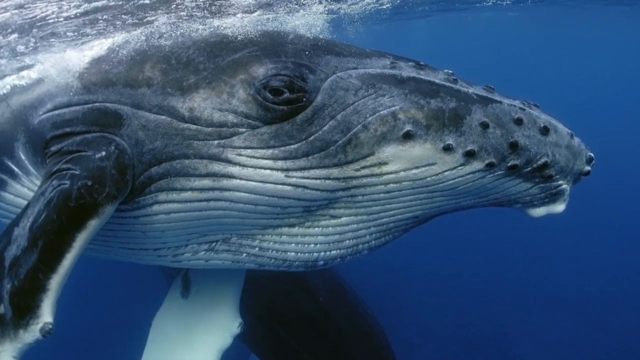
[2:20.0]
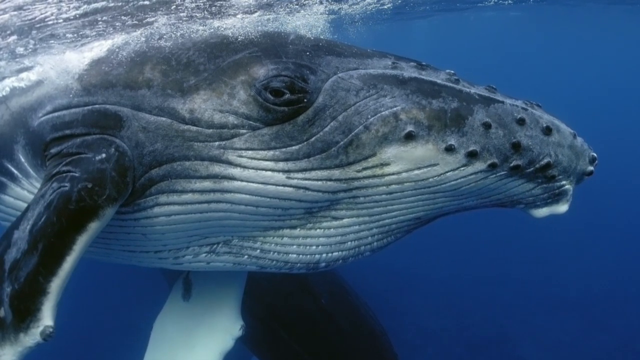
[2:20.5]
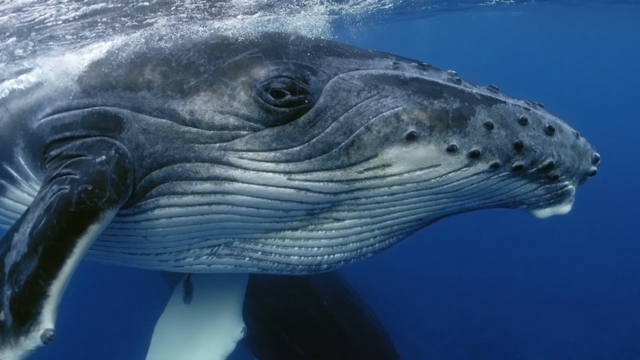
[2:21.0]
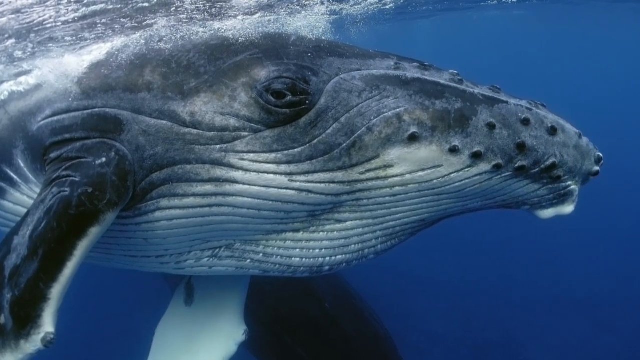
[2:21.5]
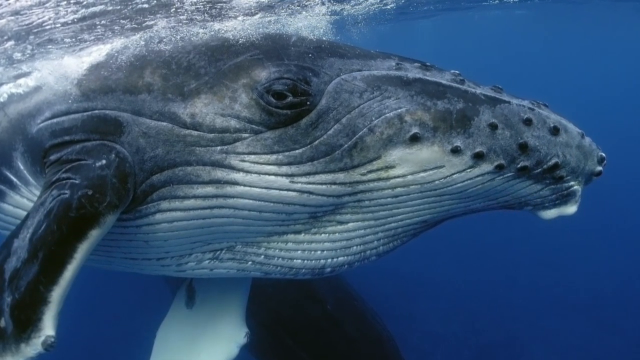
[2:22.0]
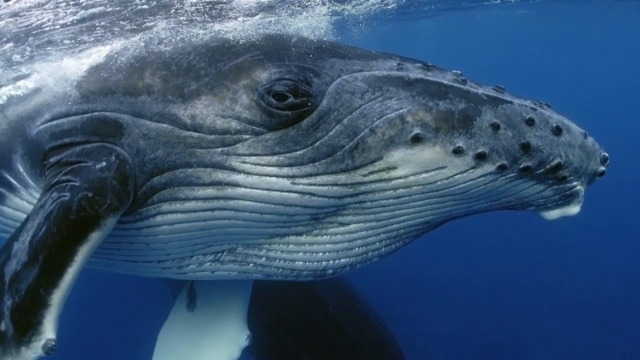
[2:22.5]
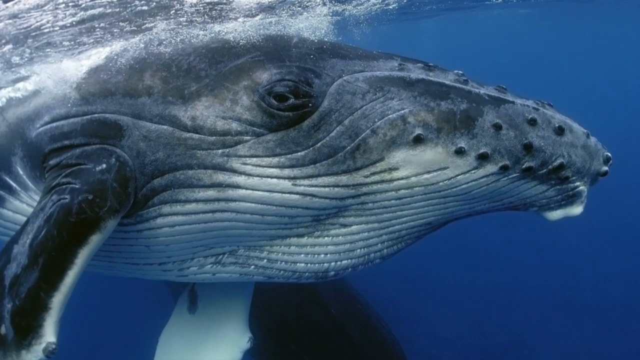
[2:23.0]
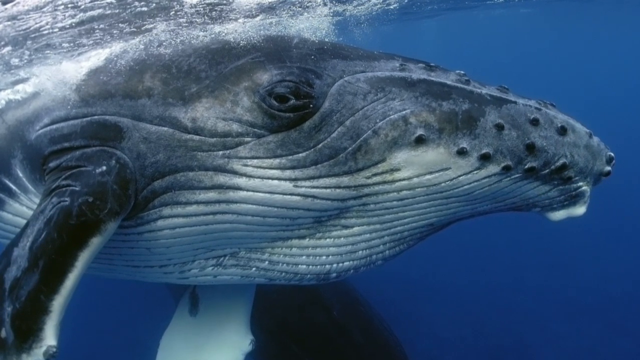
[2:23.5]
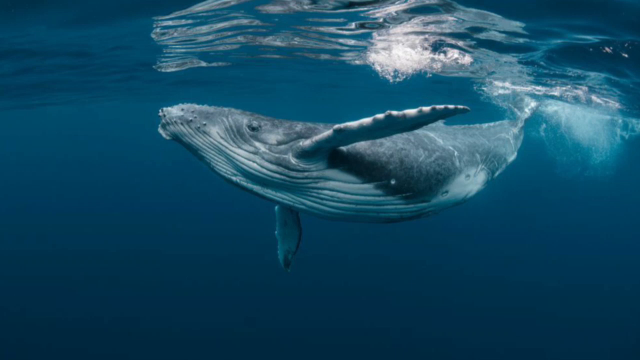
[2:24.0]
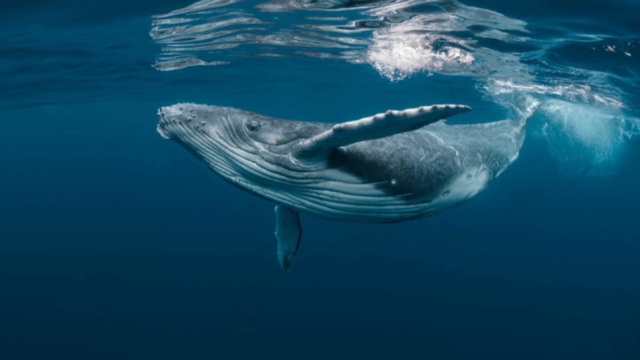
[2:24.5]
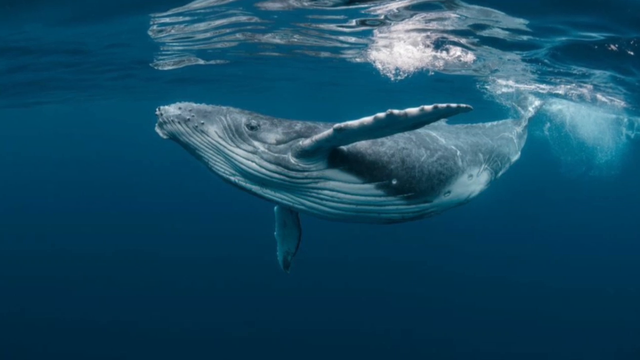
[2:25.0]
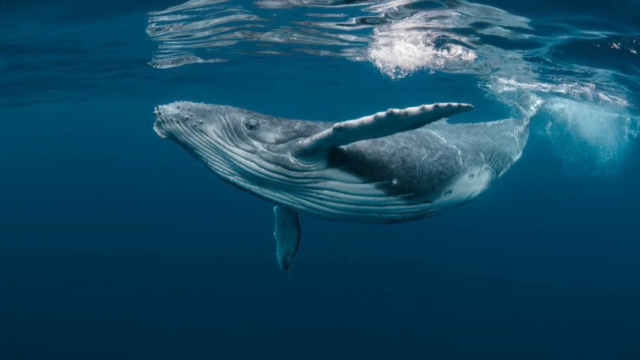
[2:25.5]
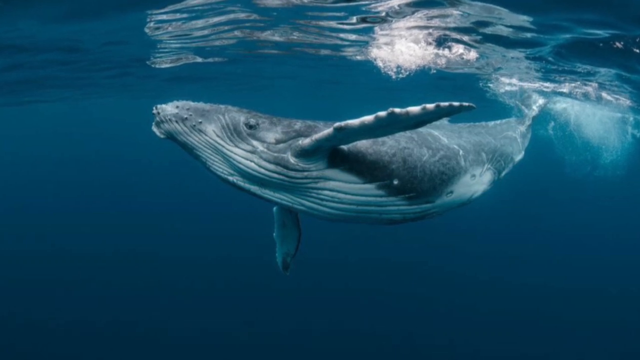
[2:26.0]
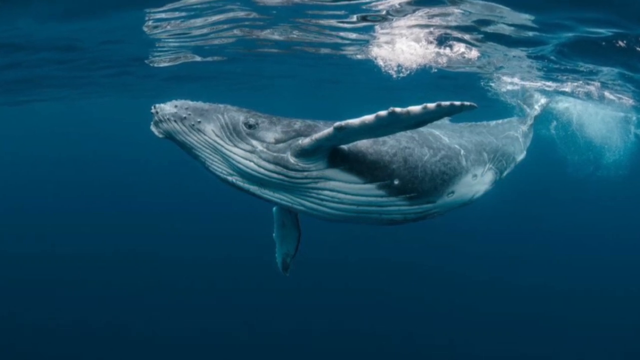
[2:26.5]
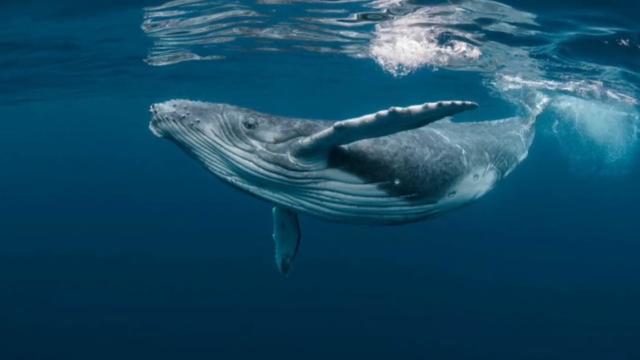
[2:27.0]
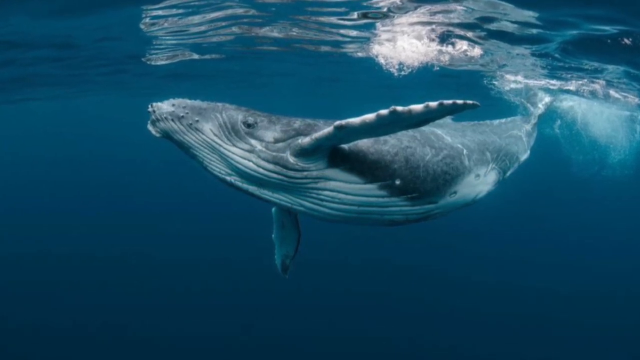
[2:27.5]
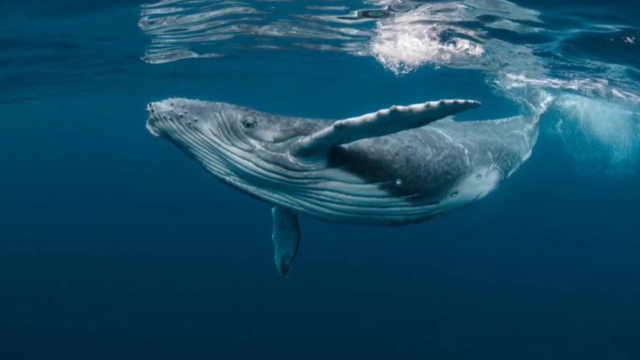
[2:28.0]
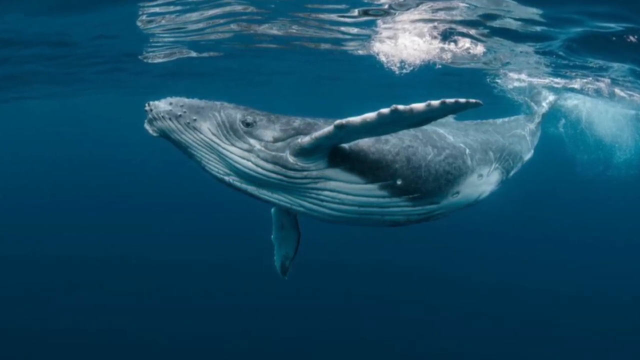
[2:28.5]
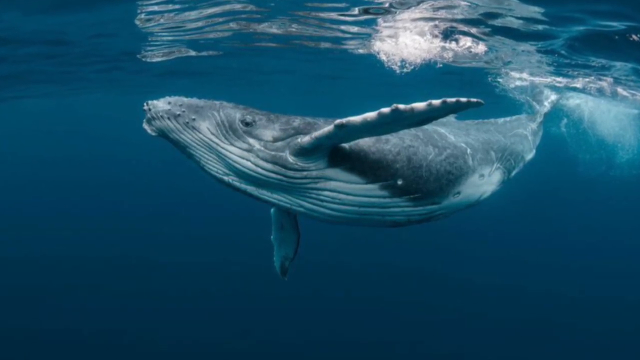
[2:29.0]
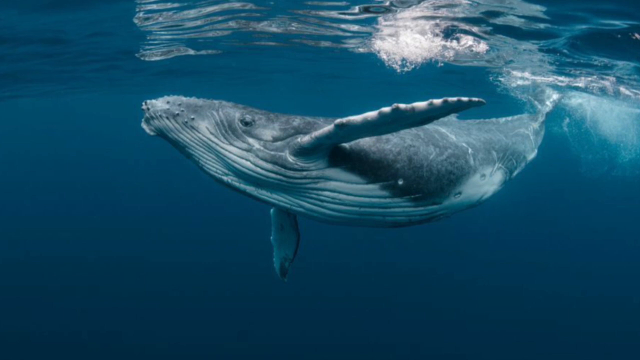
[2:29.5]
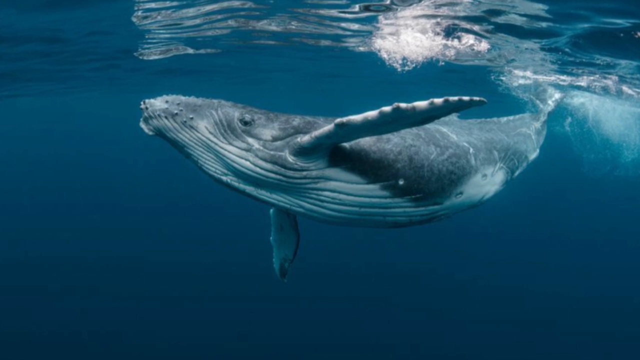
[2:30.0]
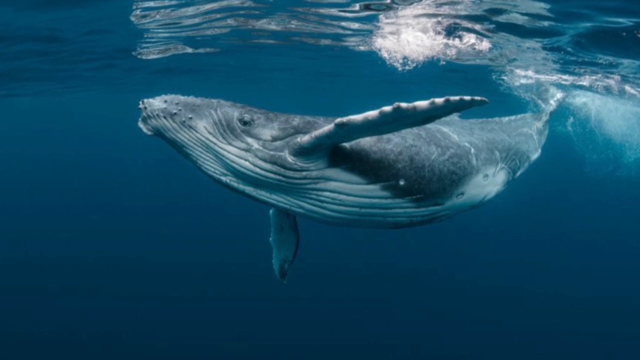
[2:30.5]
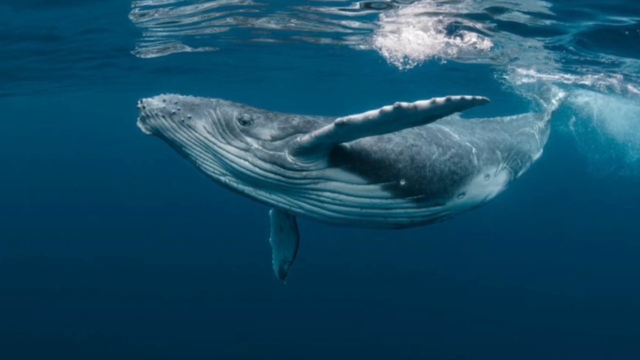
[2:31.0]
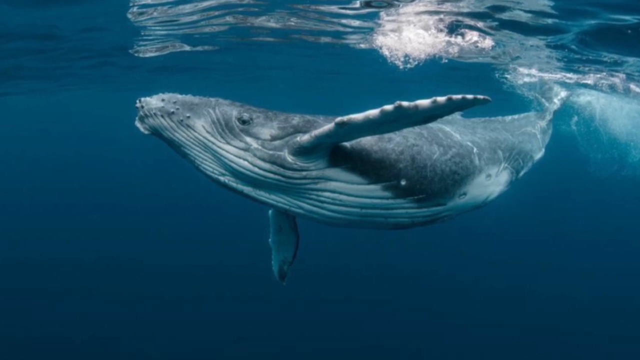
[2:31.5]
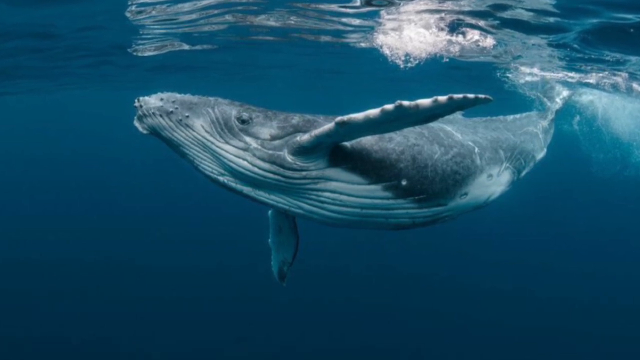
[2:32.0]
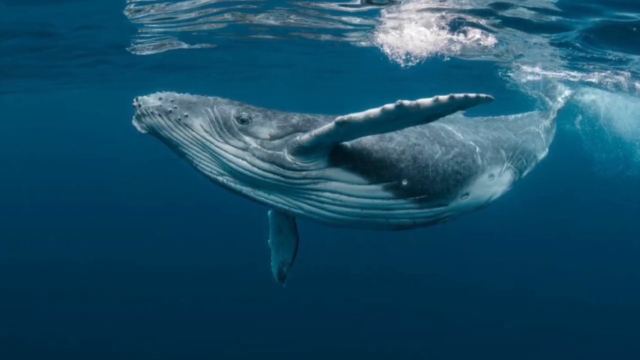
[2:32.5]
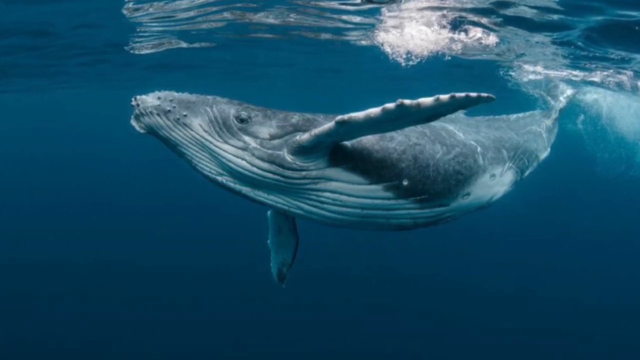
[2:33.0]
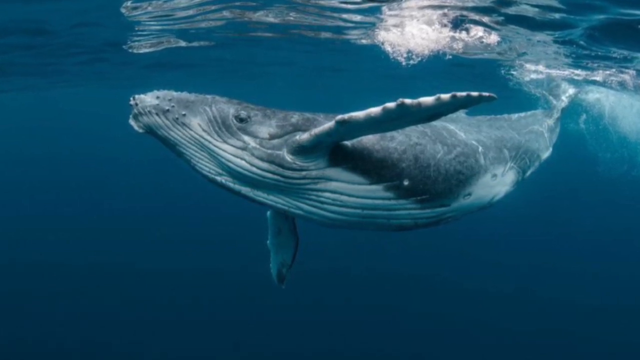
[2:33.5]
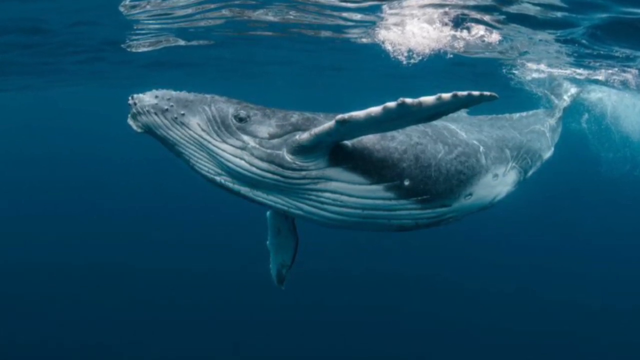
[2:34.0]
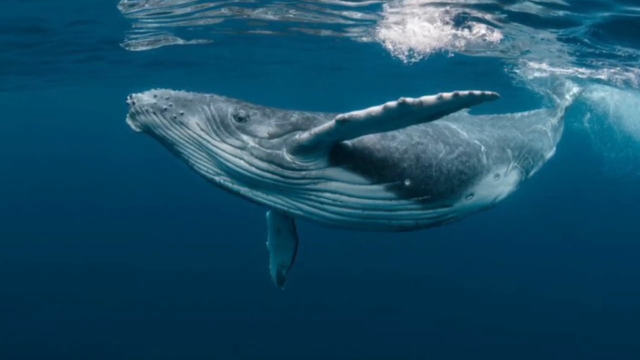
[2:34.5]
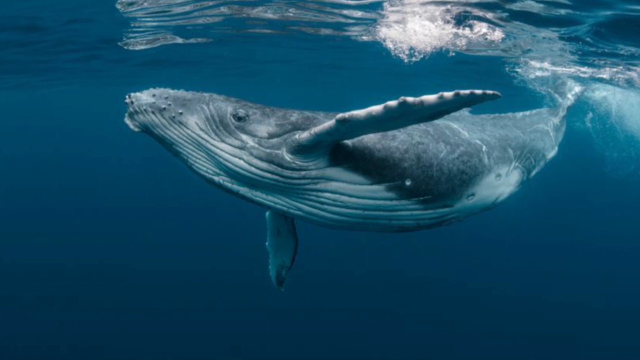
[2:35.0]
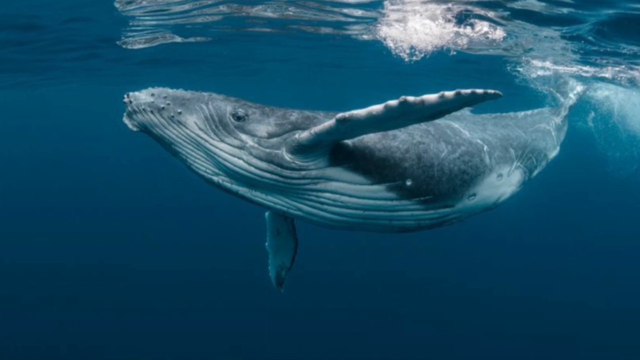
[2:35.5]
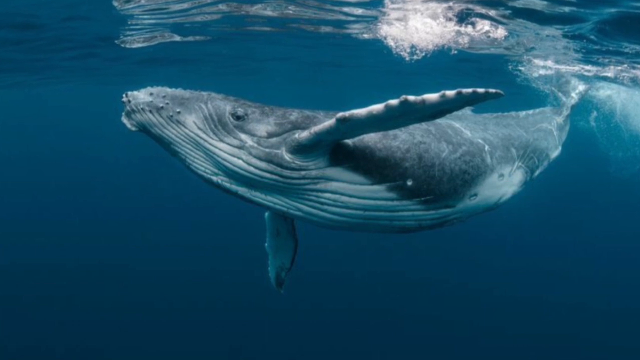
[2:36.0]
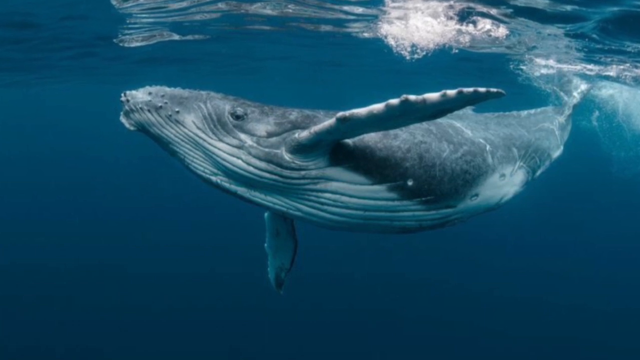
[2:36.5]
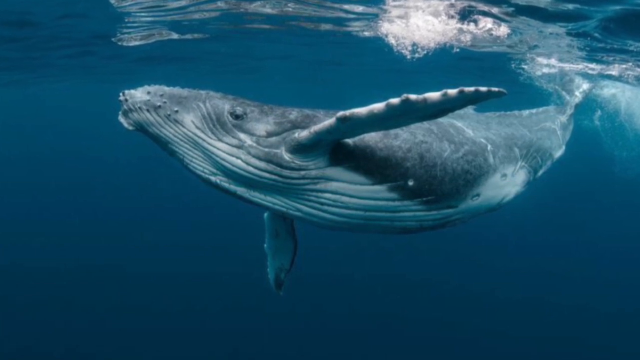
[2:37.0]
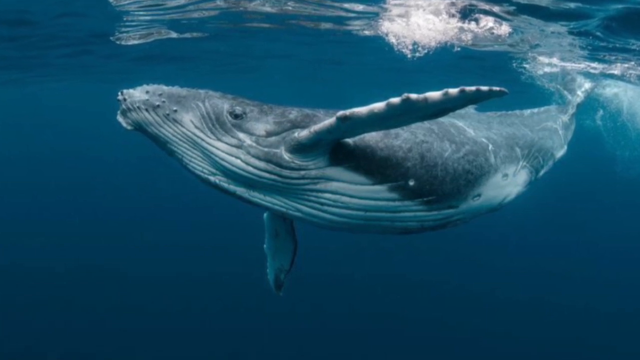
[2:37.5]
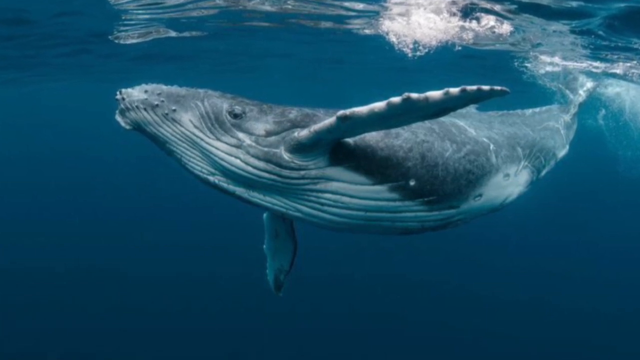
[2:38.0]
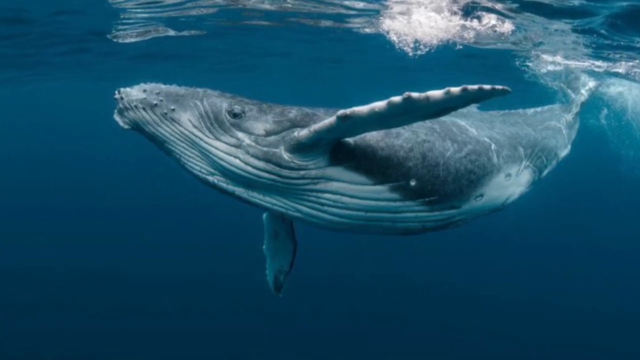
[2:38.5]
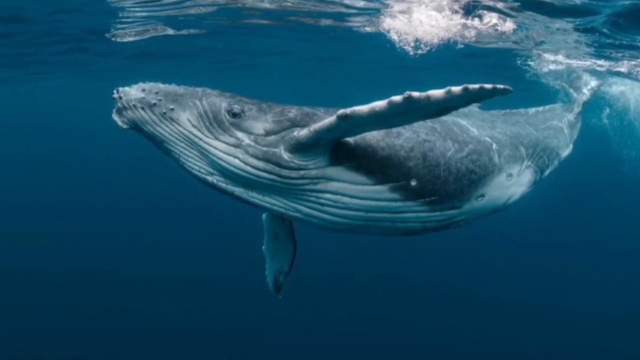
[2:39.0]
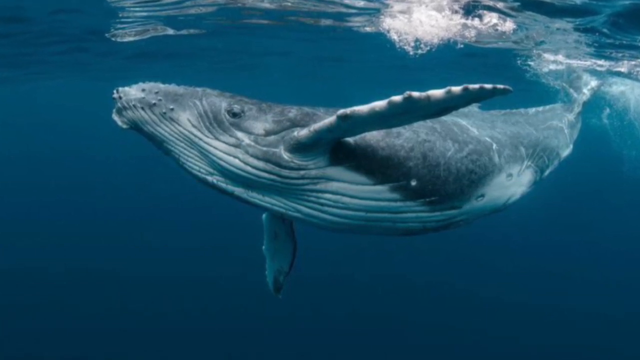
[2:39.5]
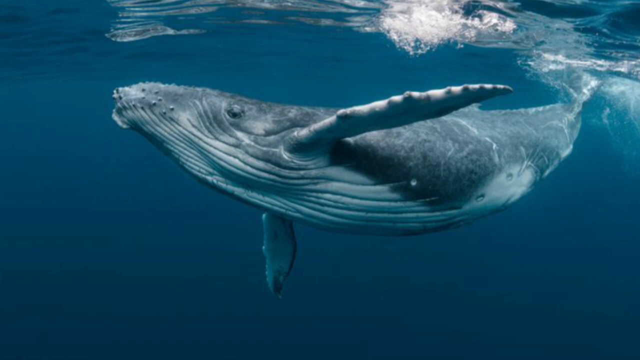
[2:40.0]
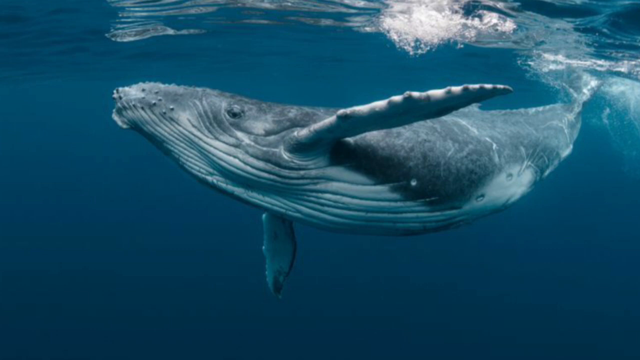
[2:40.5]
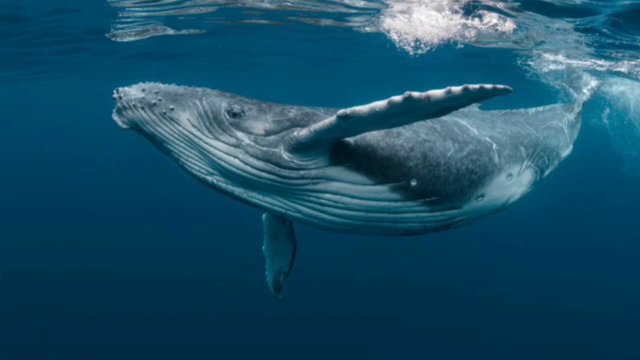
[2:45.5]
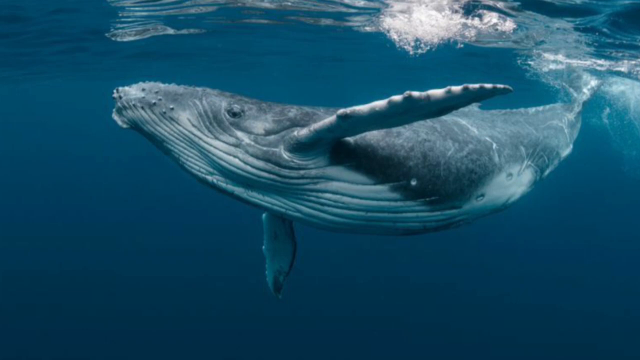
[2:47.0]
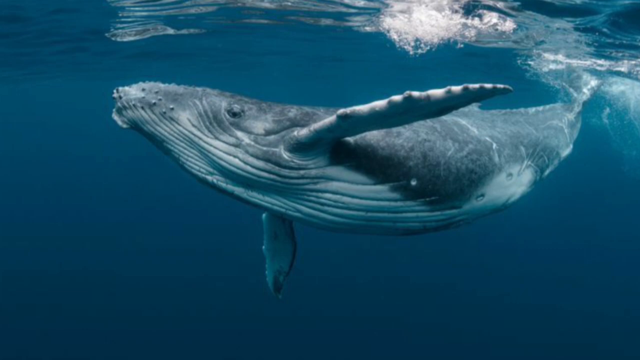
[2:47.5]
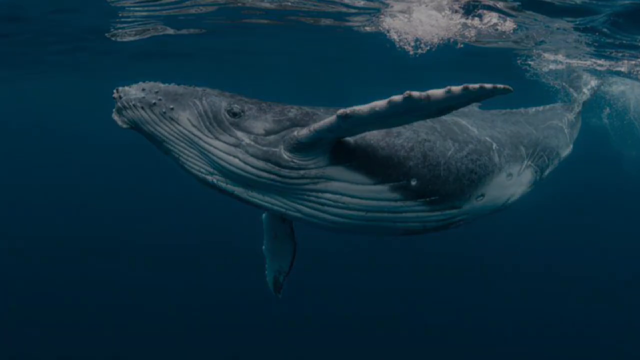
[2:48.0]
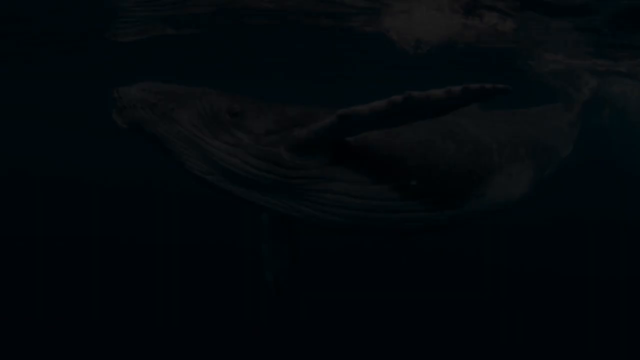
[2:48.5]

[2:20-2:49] A photograph shows a whale underwater against a blue background, with the surface of the water visible in the upper left corner. The animal has two large black and white fins and black spots under its mouth. Its lower part has black and white striations, and in the center of the frame the whale's eye is clearly visible. Another photograph shows a whale immediately below the surface of the water, with its tail at the right end of the frame outside the sea. This photo is zoomed in very slowly, revealing details of the animal: small round inflations on the whale's mouth and fairly deep striations in its lower part, which is white and dark gray.